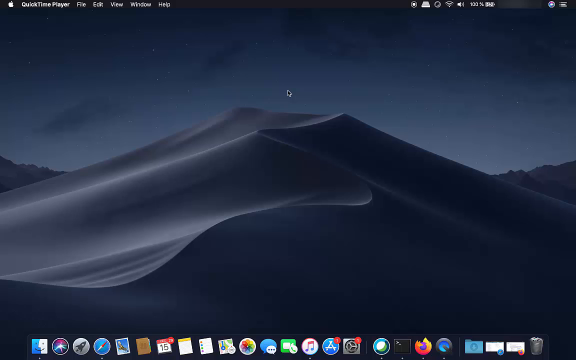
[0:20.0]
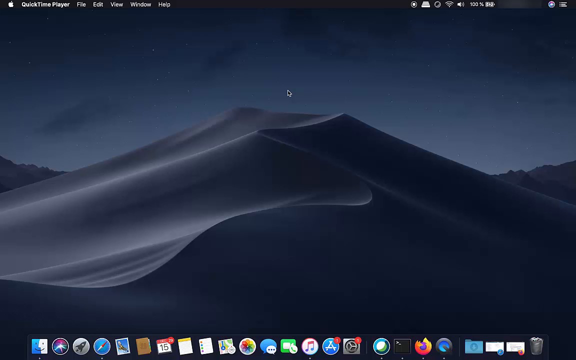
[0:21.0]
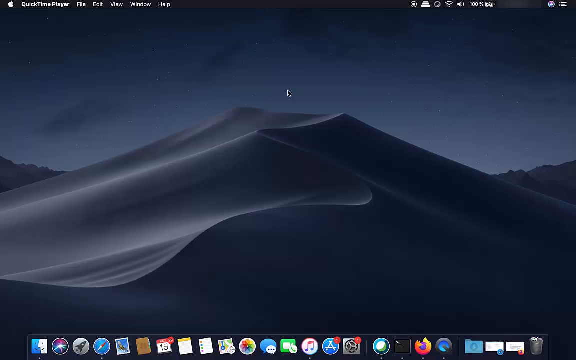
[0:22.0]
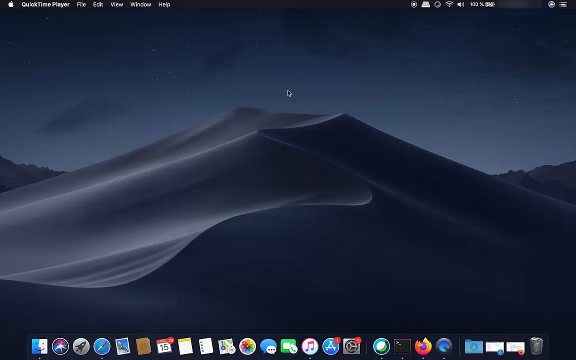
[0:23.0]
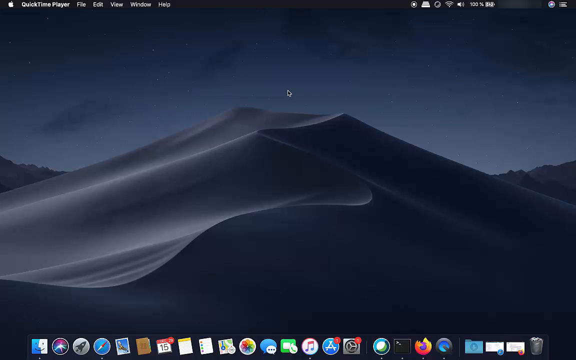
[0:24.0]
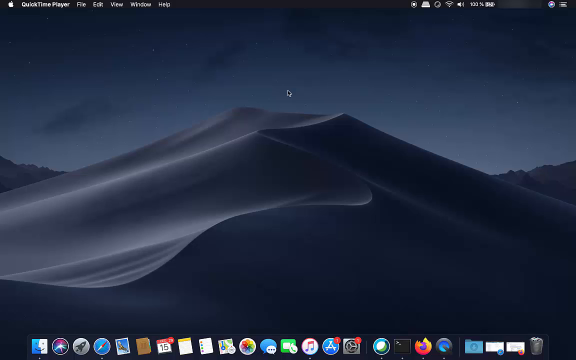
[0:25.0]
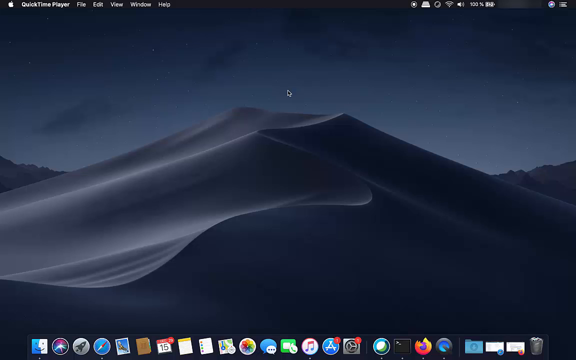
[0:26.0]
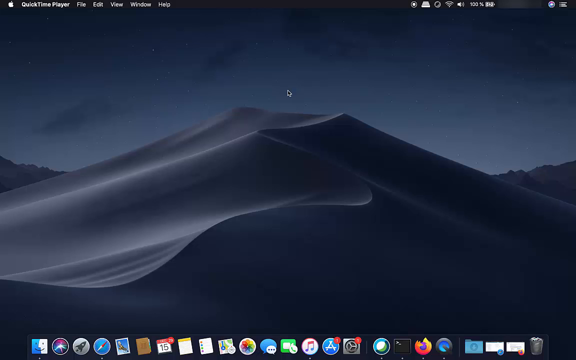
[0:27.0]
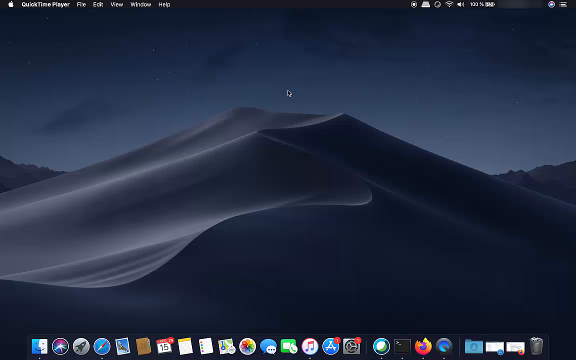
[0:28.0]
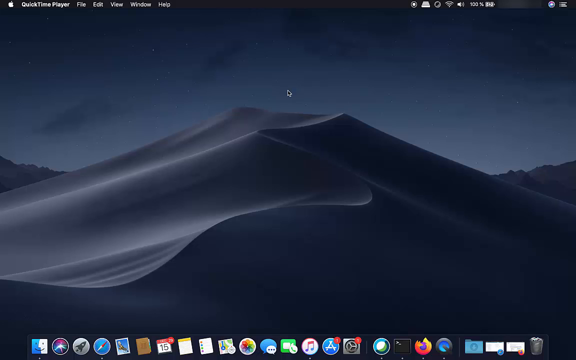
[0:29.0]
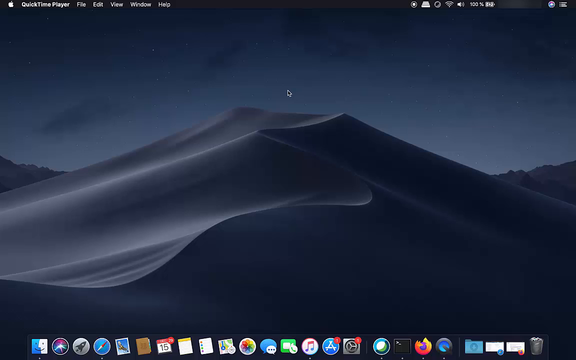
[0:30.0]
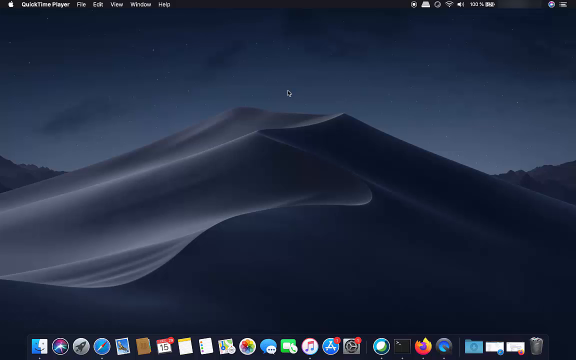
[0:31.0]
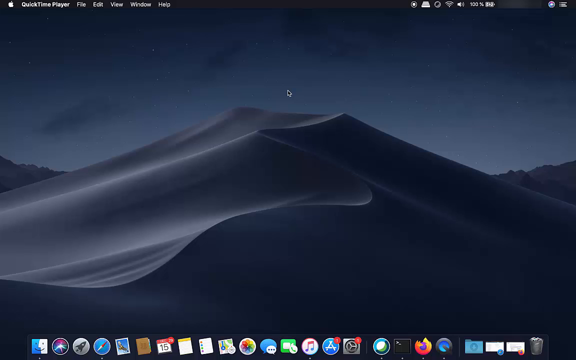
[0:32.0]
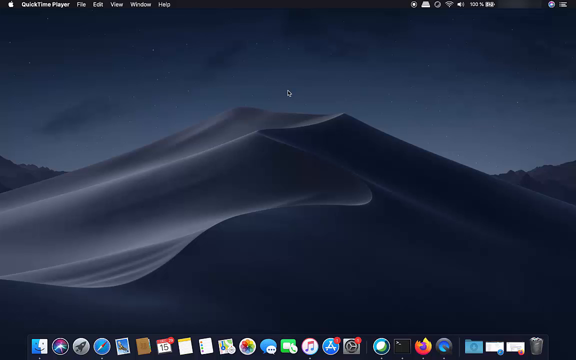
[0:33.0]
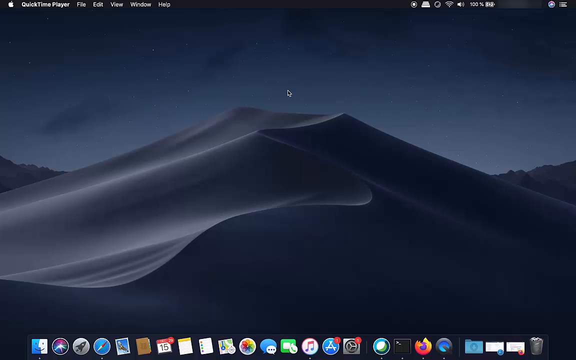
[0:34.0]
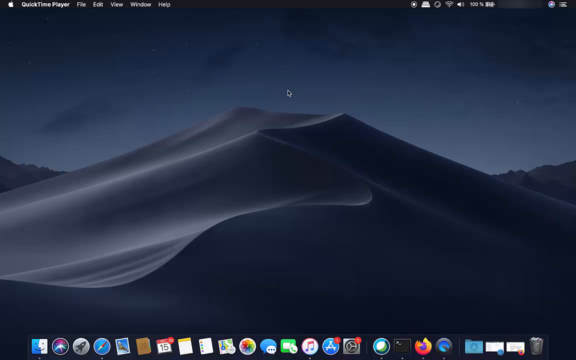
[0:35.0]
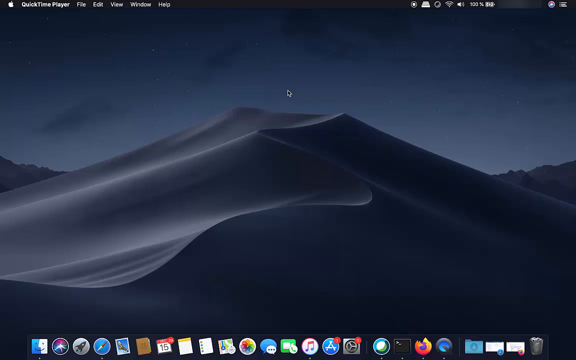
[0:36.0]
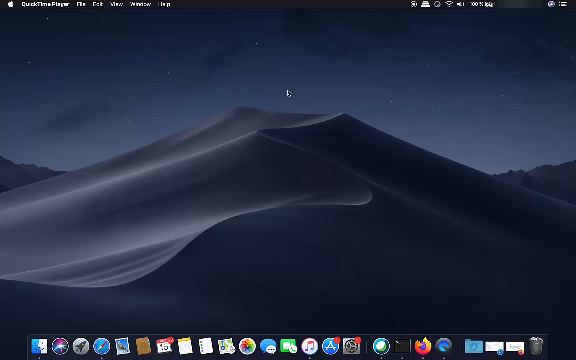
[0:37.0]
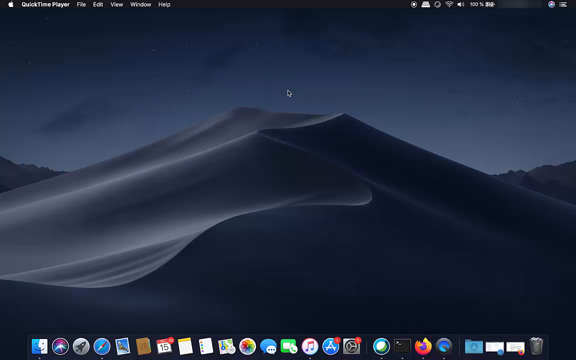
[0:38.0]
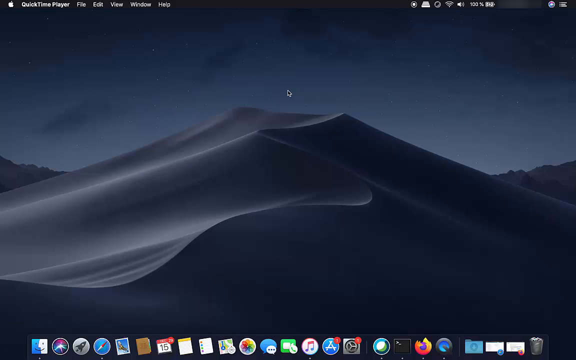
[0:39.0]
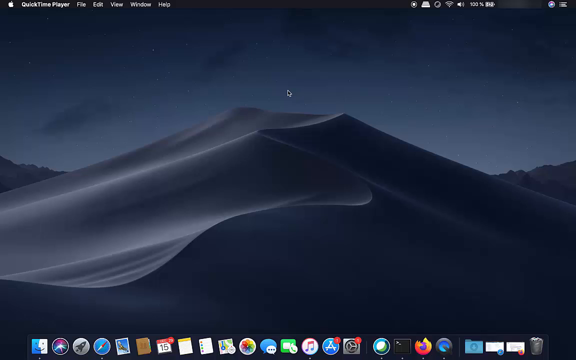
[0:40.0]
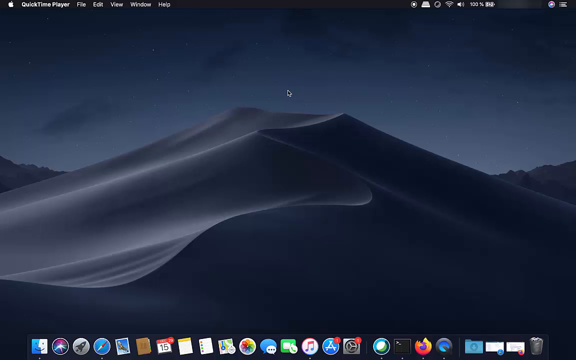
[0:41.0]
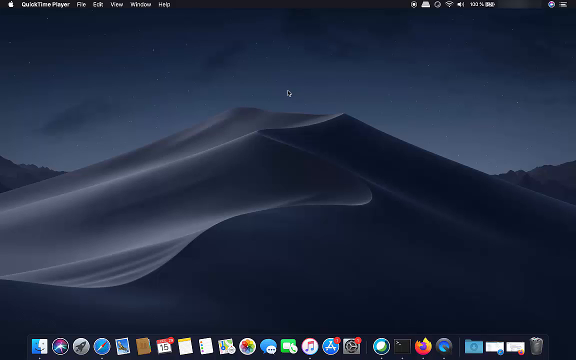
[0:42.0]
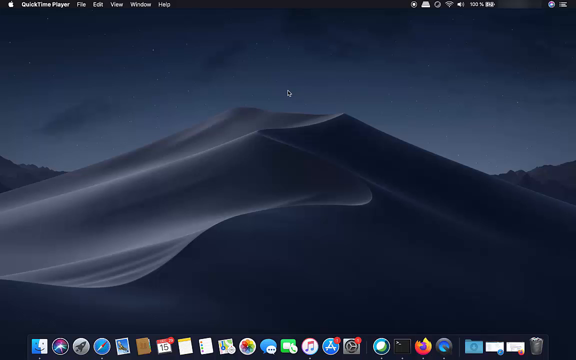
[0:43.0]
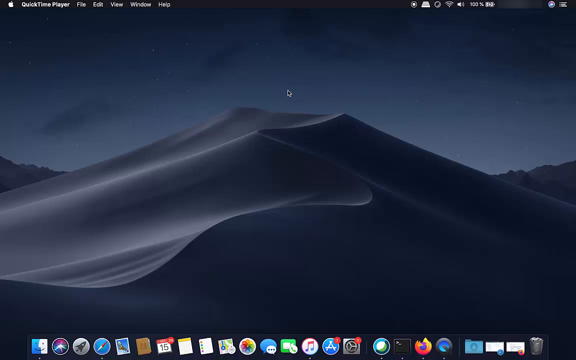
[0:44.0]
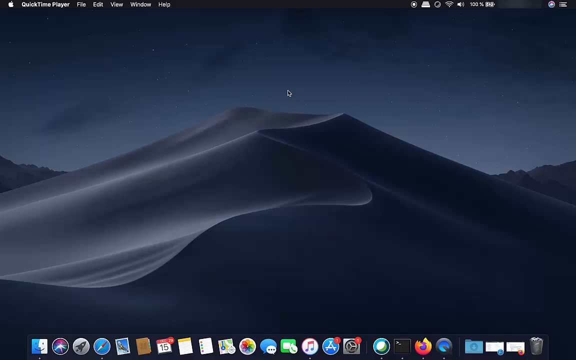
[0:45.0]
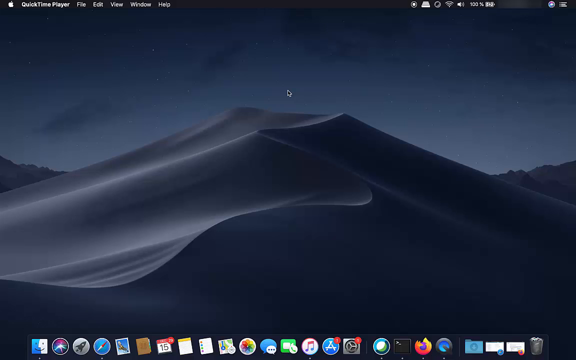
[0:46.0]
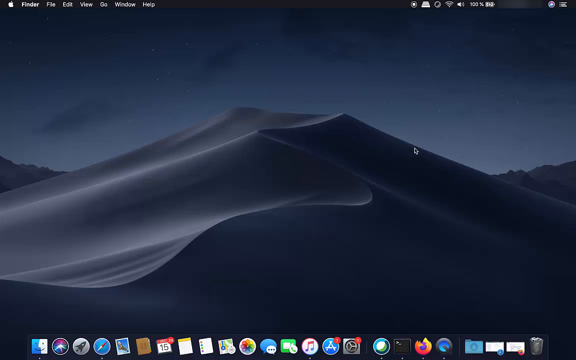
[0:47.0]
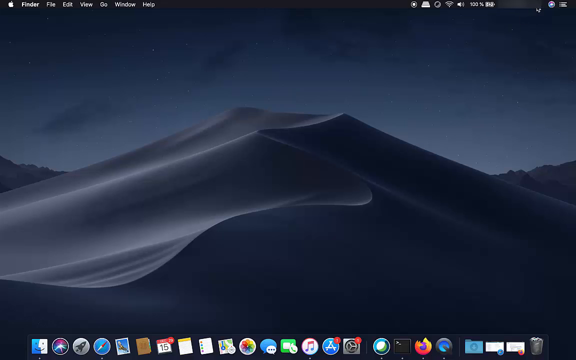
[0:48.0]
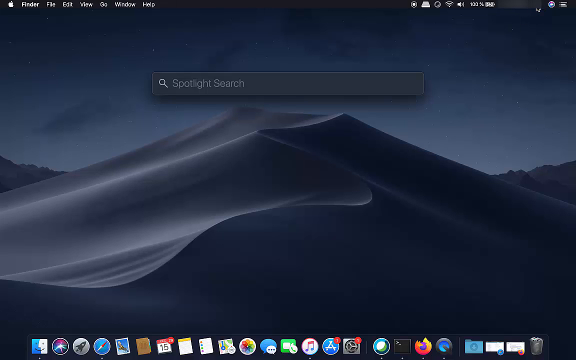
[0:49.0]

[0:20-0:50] A hill made of sand looks very smooth, its left side much lighter in color than its right side. It is nighttime, and the sky is dark except down at the horizon, where it meets the hills and the land and is a little lighter. Someone moves the cursor, showing that this is a computer screen. They click on something above, and a little pop-up appears in the middle of the screen. The cursor then stays stationary on the upper portion of the webpage, above the hill, which looks like it might be the screensaver. The smooth sand hill's left side is lighter, probably because the moonlight shines down on it, while the right side is darker because it is hidden by the left side of the hill.